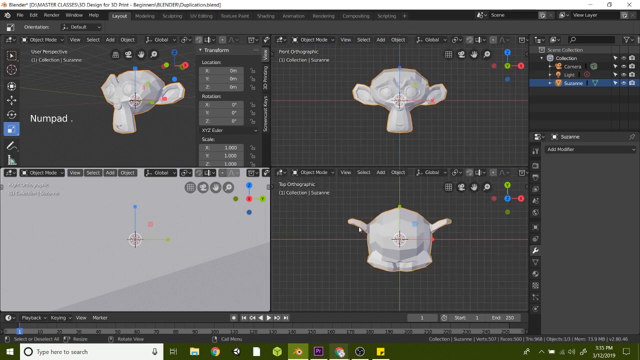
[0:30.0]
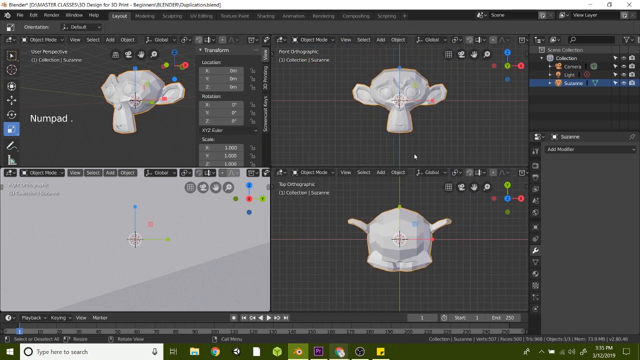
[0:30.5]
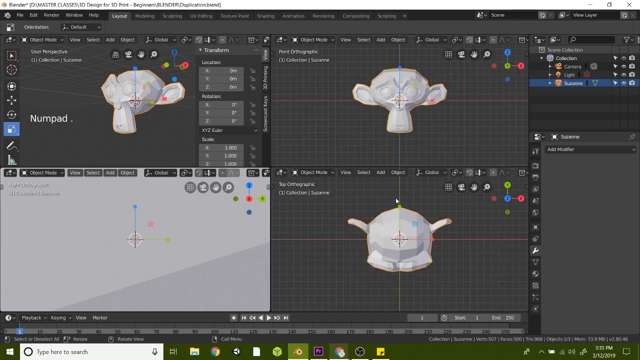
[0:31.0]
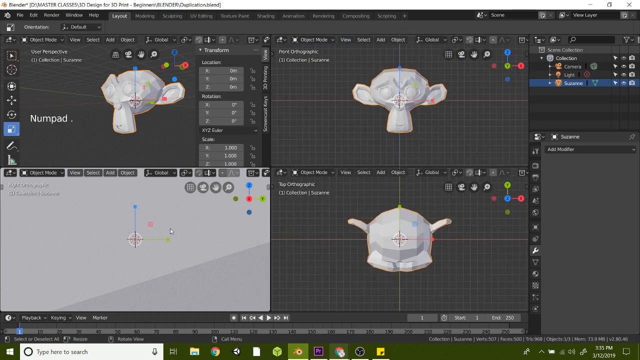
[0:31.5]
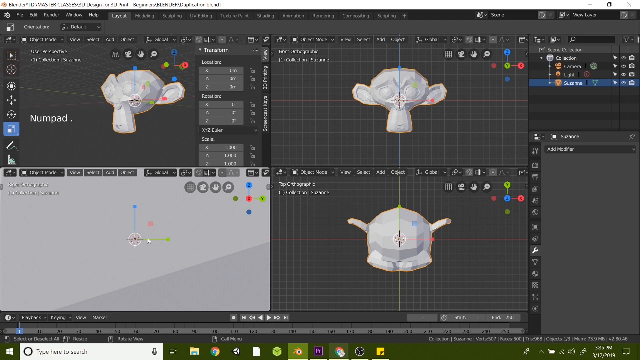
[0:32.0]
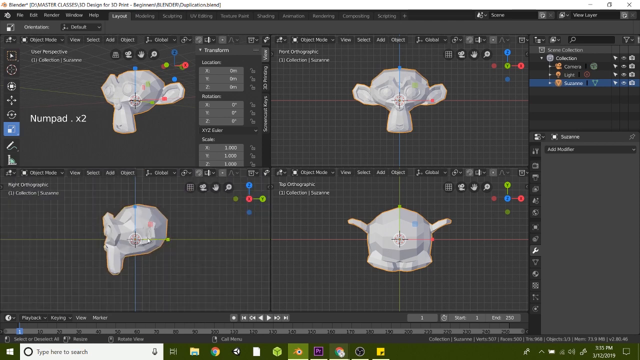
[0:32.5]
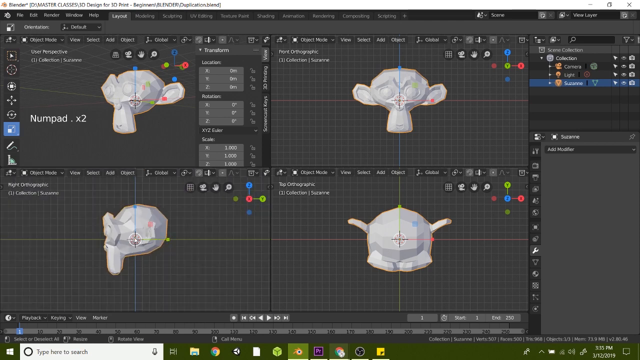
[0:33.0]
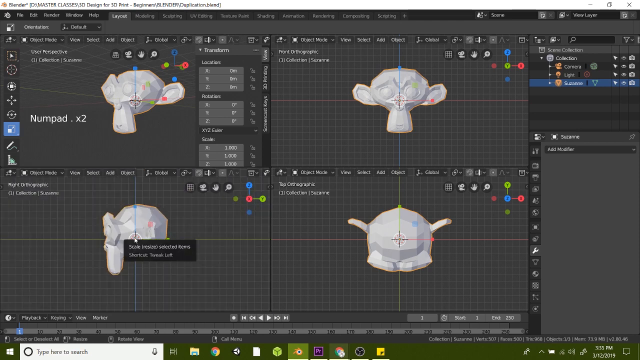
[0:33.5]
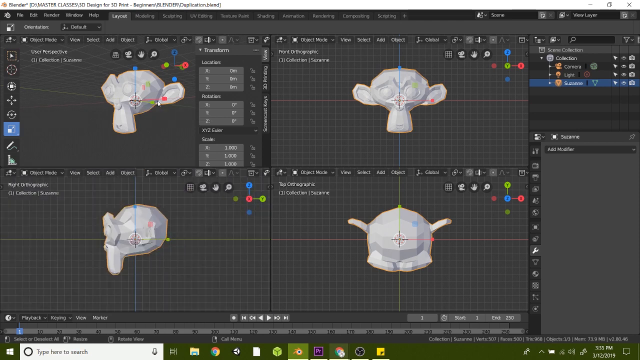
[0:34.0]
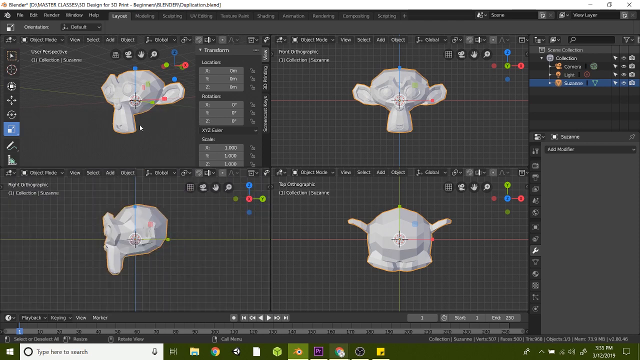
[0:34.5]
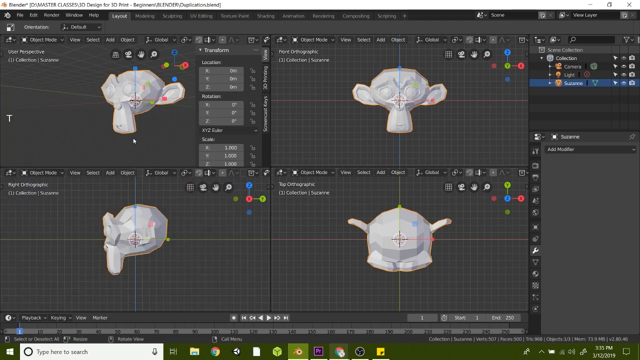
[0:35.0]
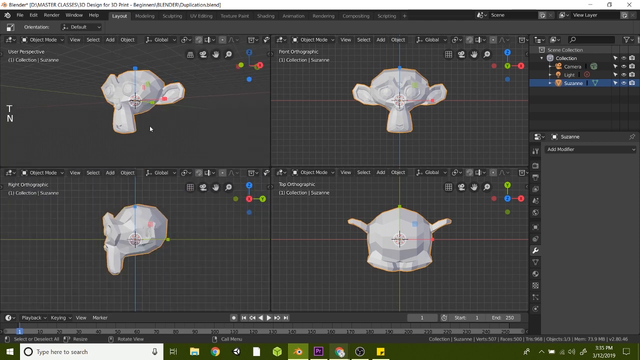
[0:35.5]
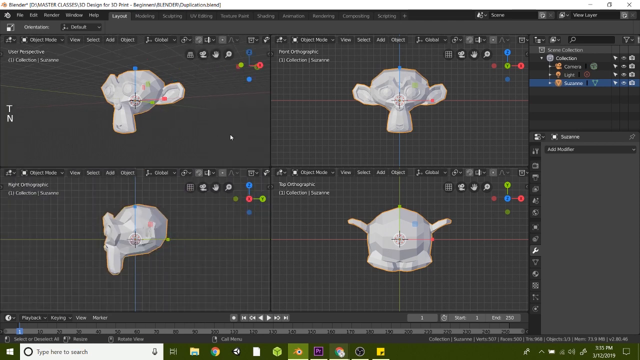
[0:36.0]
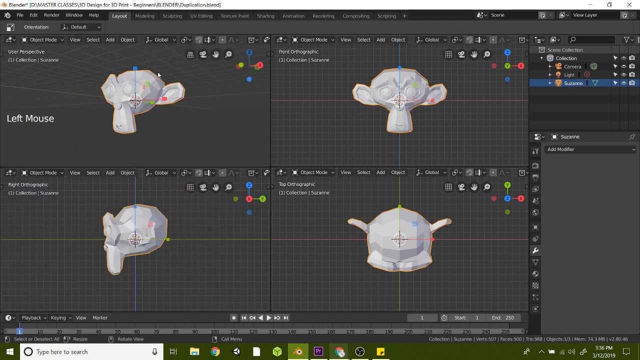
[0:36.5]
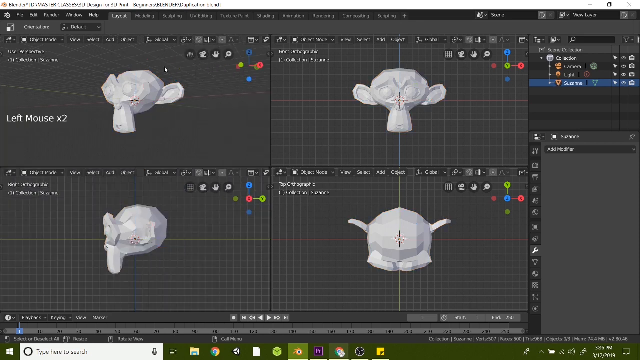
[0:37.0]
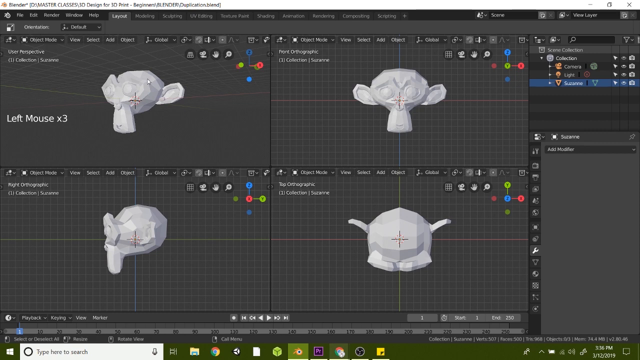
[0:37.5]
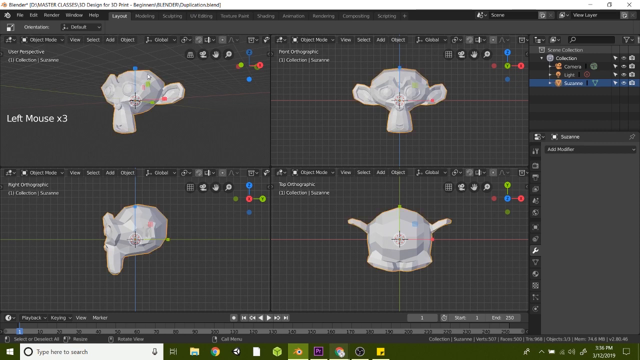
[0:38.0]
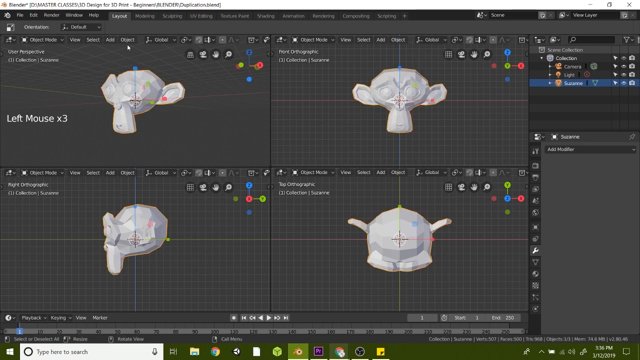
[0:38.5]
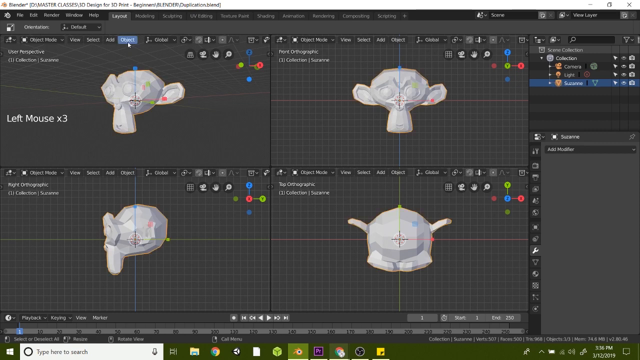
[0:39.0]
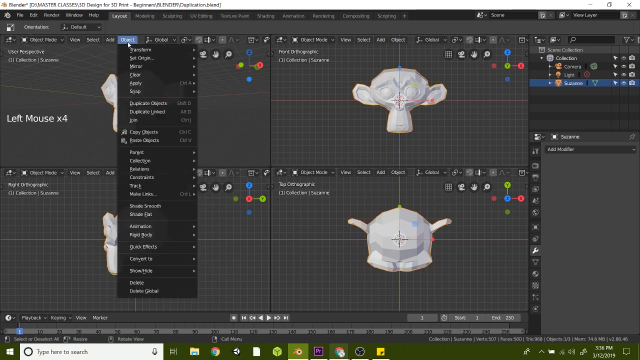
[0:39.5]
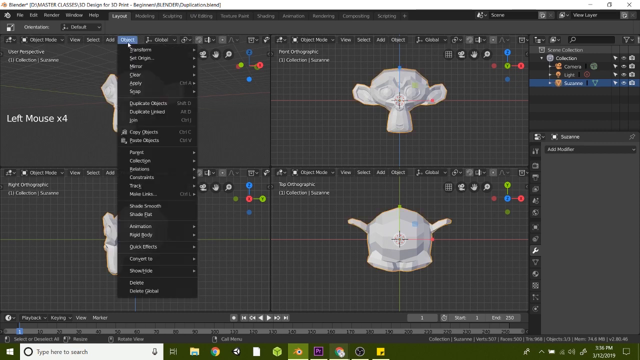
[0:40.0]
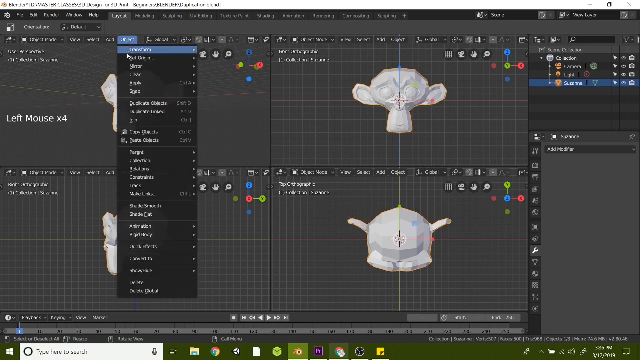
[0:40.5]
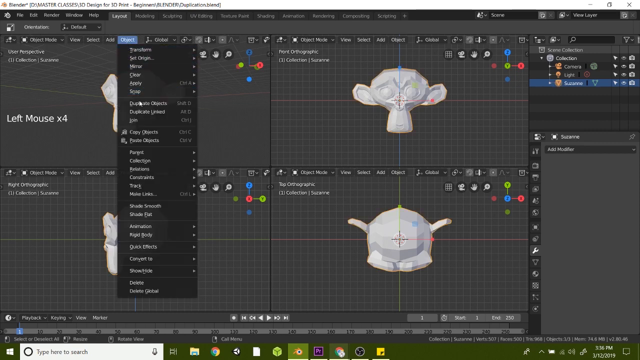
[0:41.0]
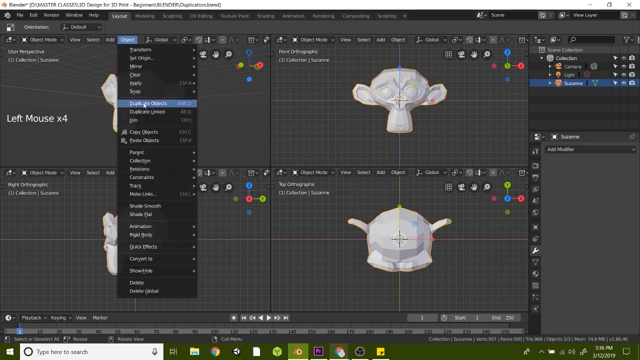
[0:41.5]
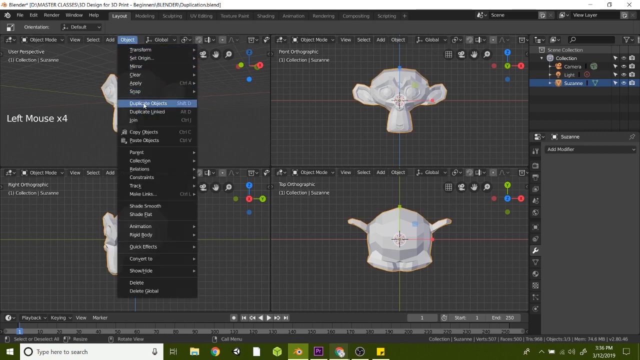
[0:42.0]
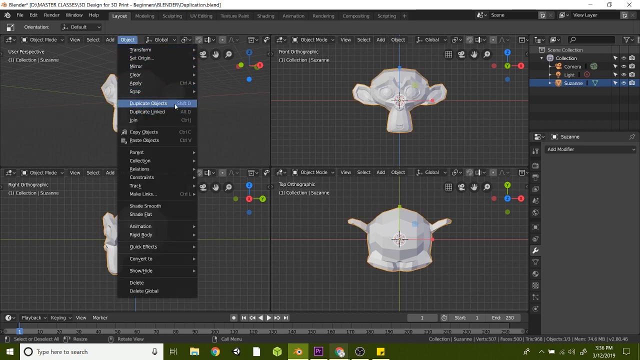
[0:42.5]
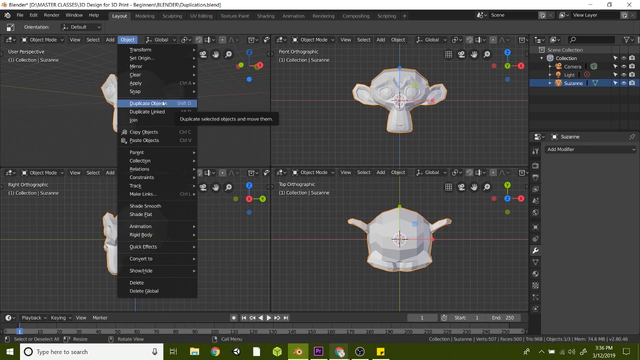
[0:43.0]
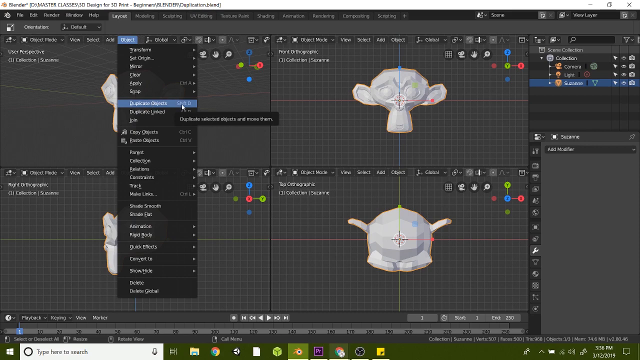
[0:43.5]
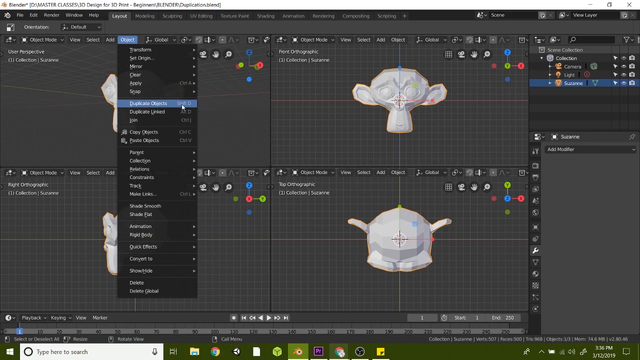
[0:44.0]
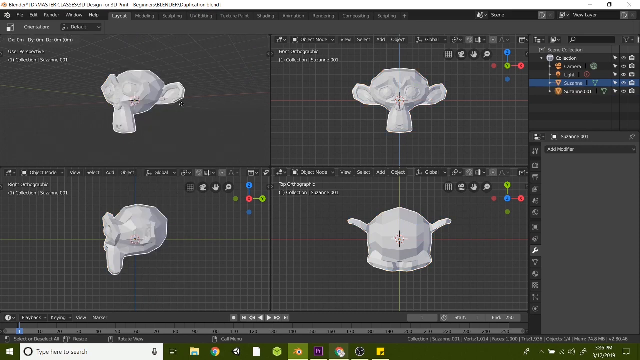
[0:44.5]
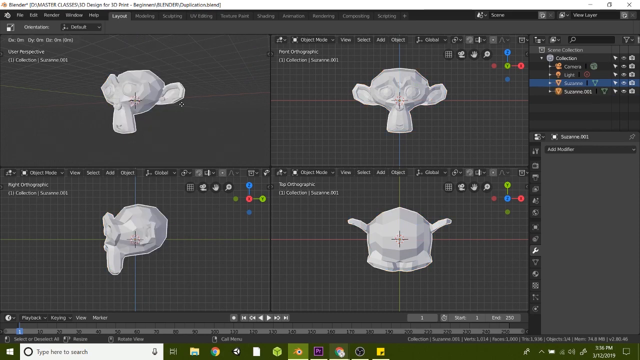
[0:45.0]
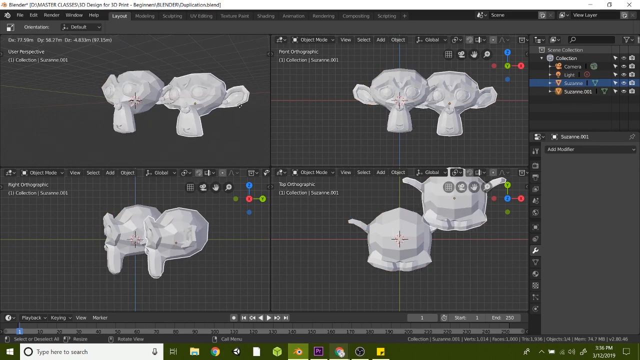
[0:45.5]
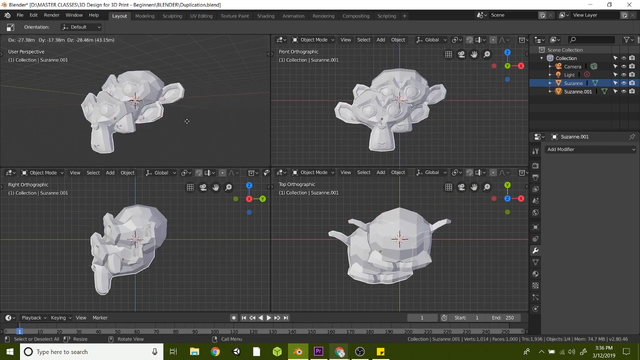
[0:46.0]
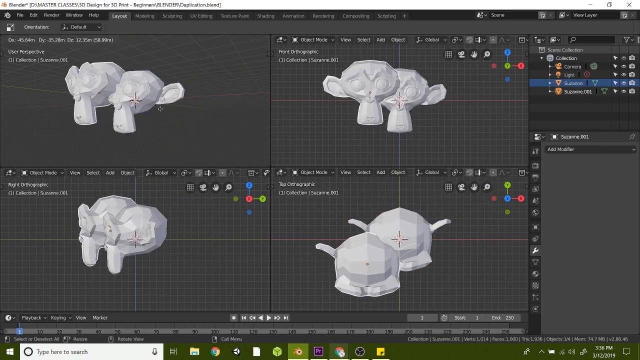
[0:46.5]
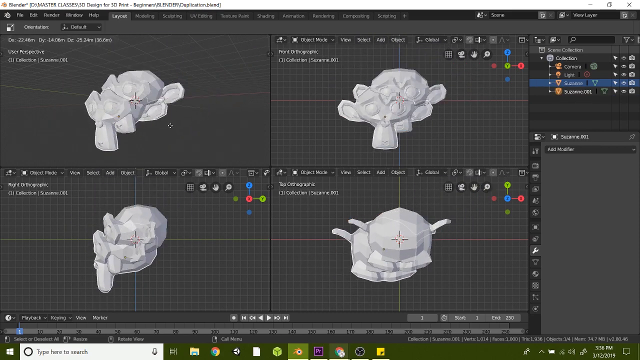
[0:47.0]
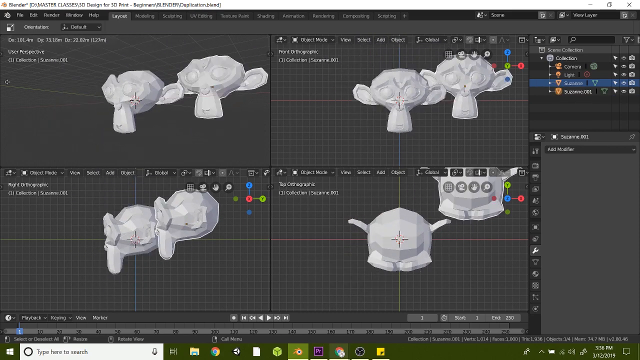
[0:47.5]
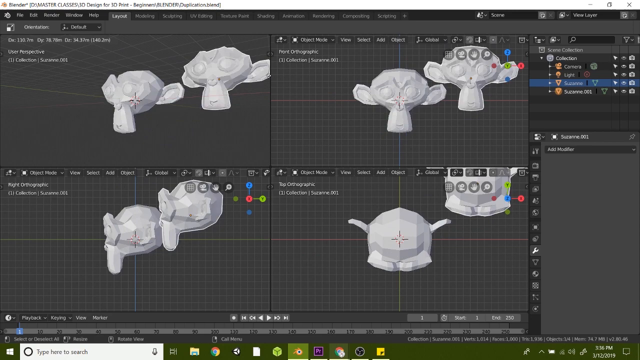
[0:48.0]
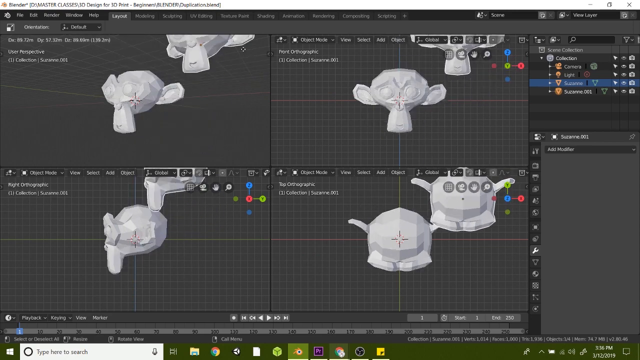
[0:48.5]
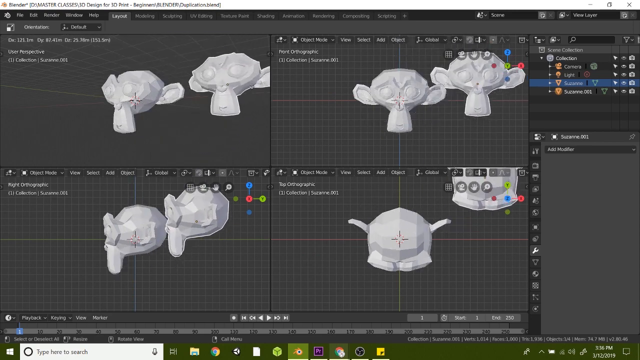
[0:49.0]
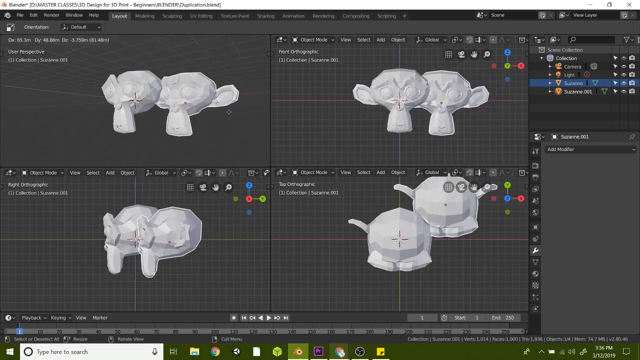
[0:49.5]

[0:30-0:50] The man continues moving around Blender, apparently showing how the program works with simple movements and experimenting.